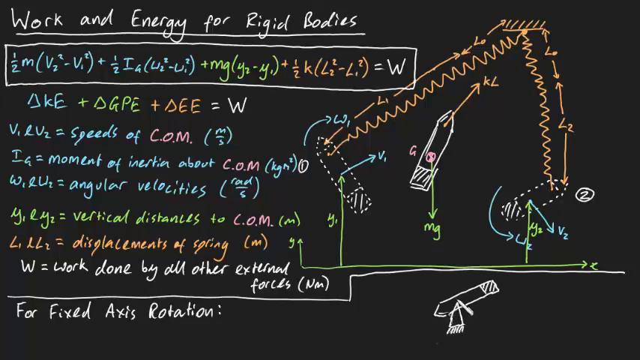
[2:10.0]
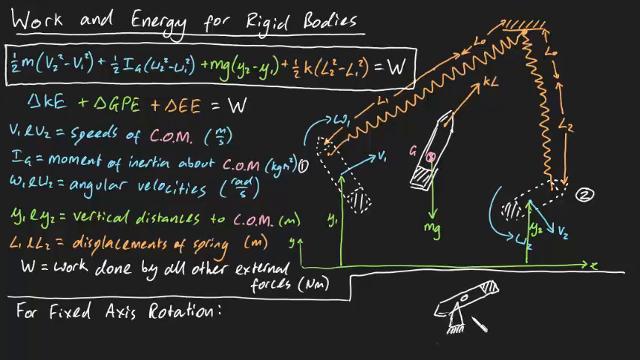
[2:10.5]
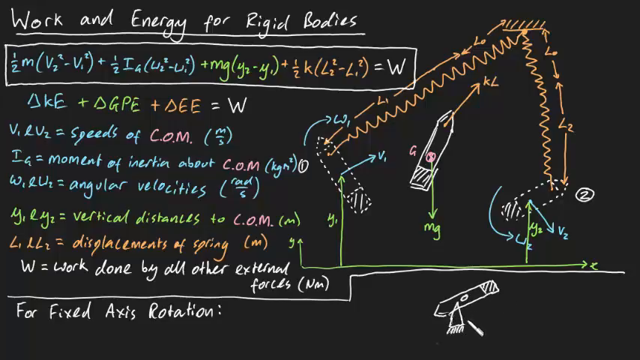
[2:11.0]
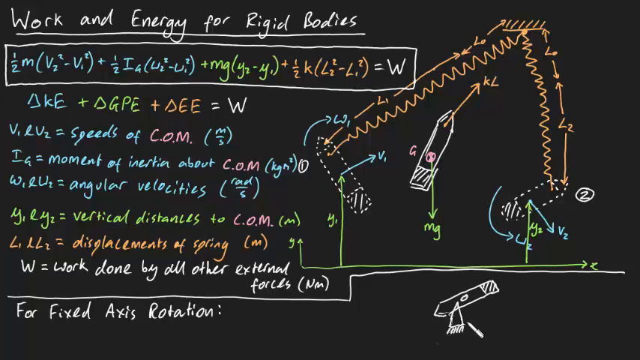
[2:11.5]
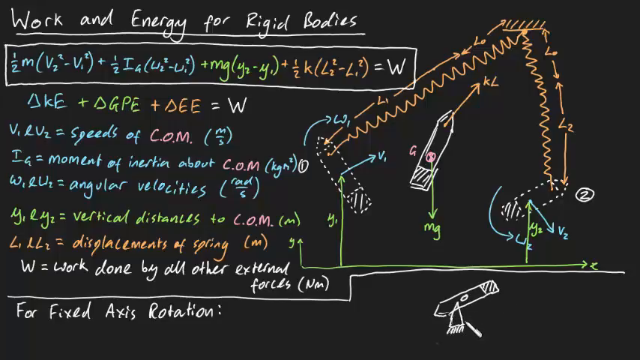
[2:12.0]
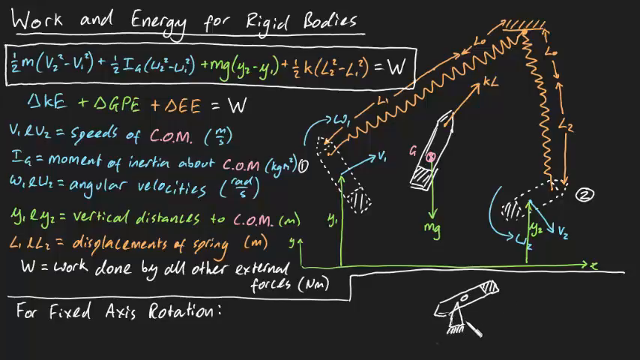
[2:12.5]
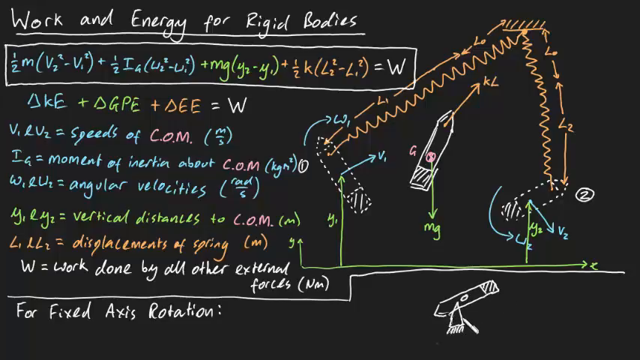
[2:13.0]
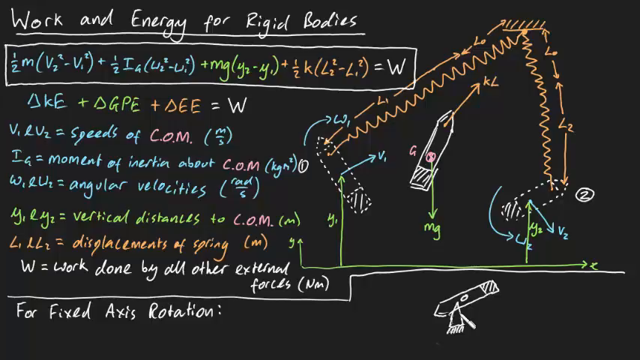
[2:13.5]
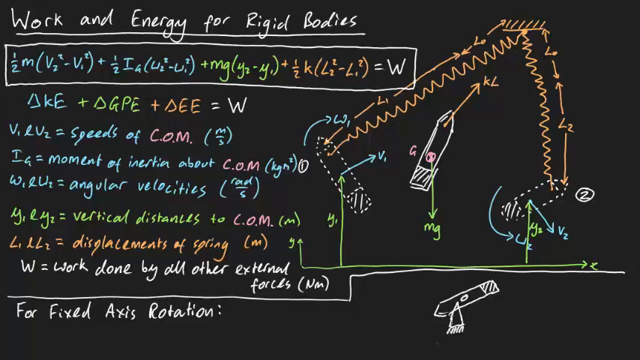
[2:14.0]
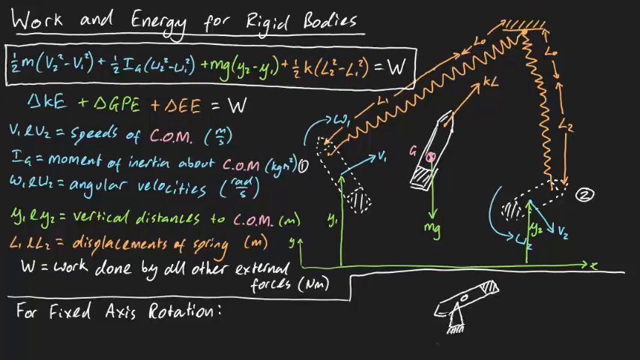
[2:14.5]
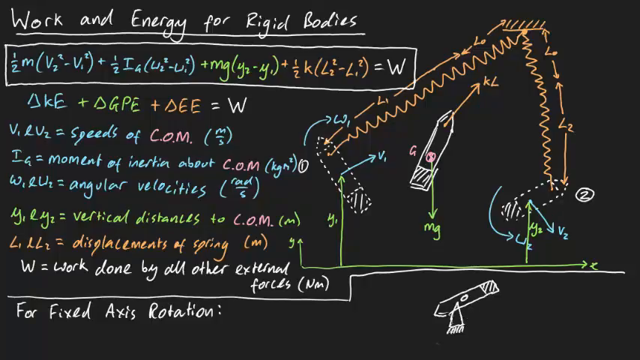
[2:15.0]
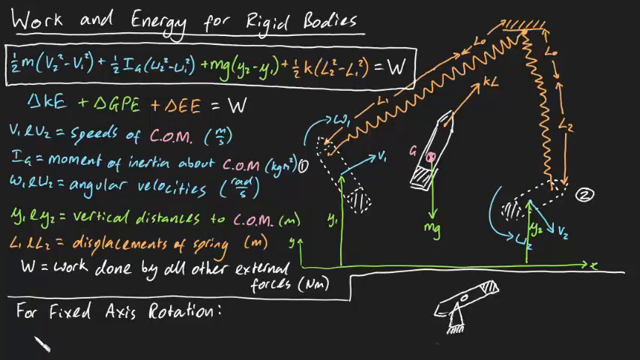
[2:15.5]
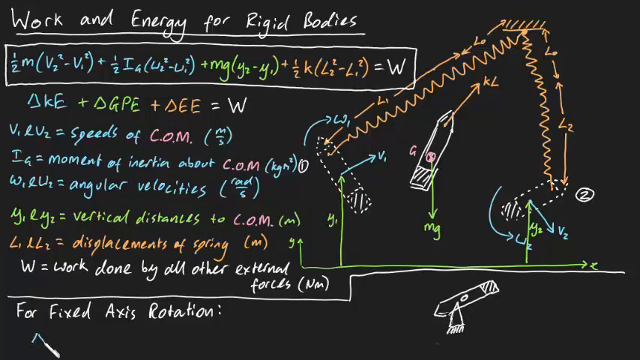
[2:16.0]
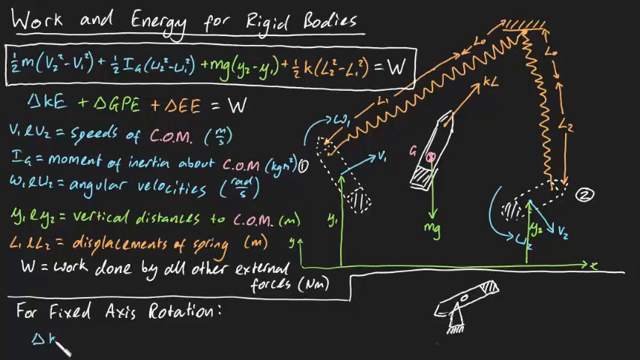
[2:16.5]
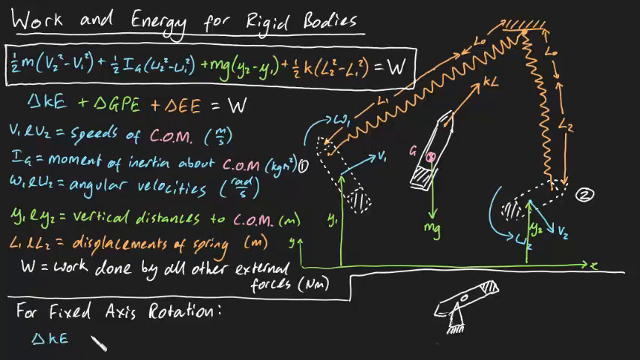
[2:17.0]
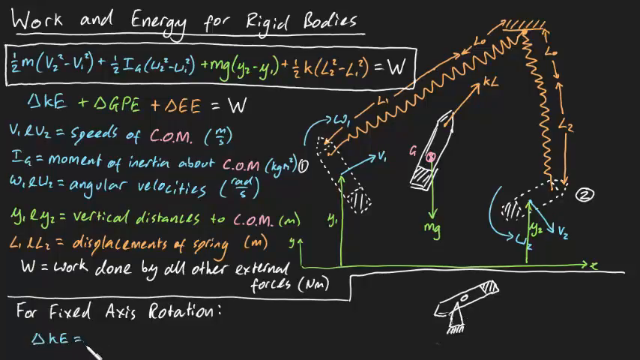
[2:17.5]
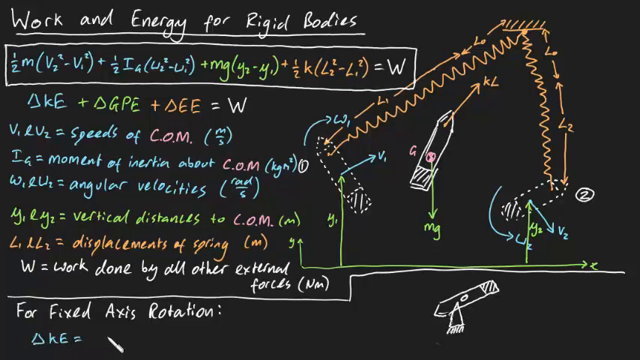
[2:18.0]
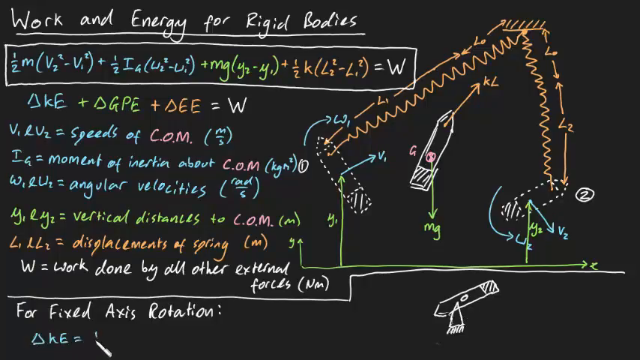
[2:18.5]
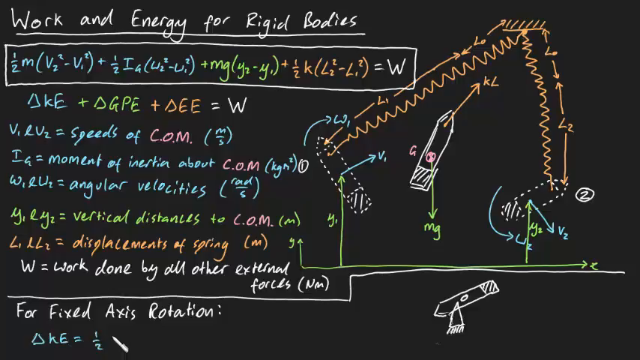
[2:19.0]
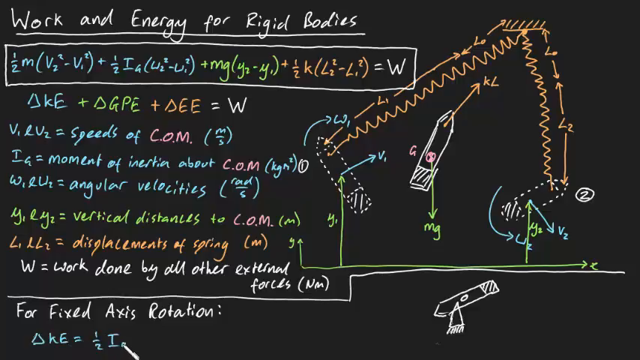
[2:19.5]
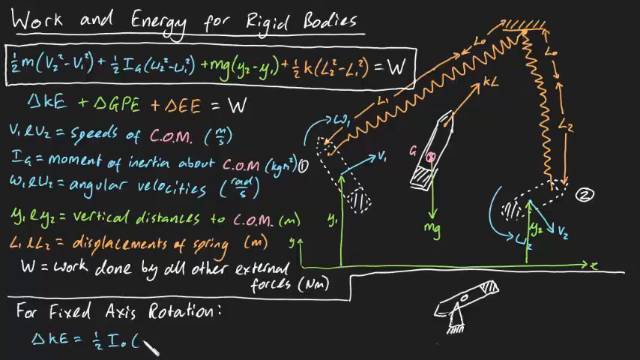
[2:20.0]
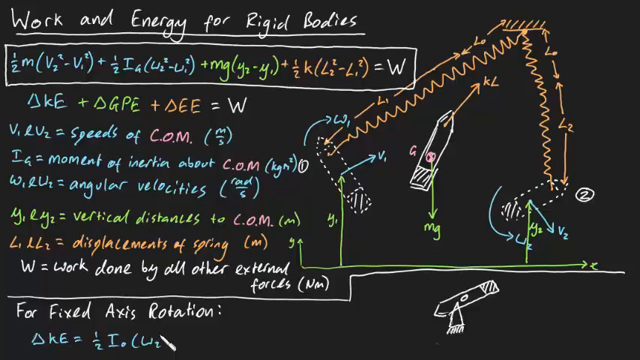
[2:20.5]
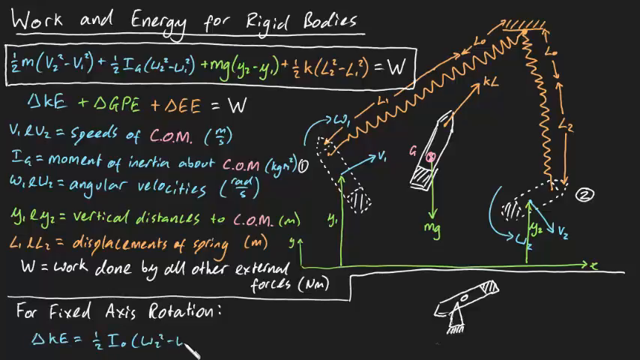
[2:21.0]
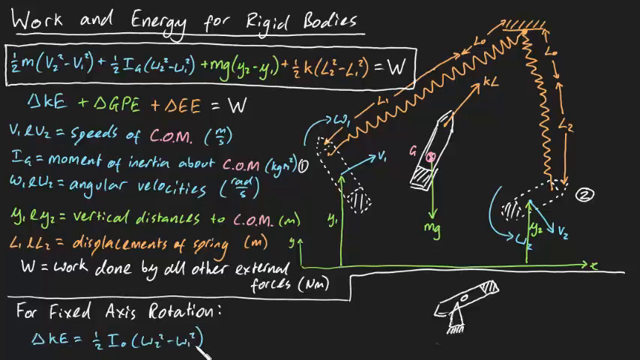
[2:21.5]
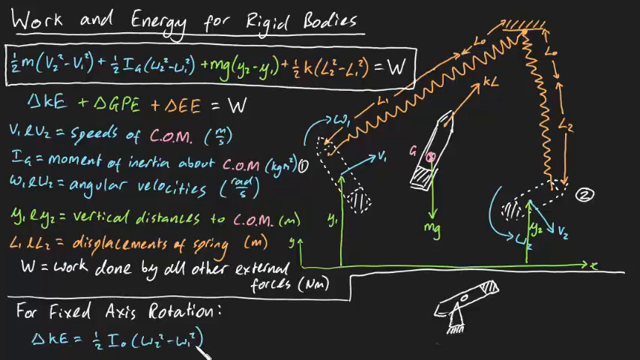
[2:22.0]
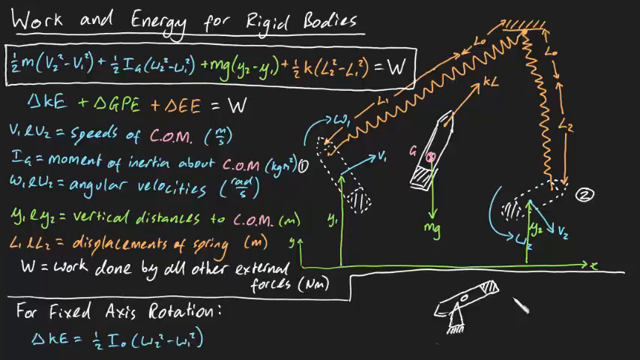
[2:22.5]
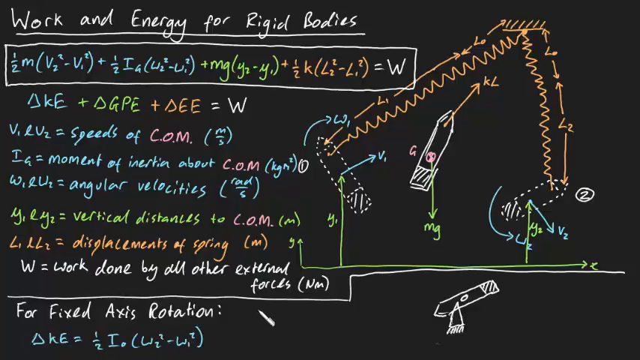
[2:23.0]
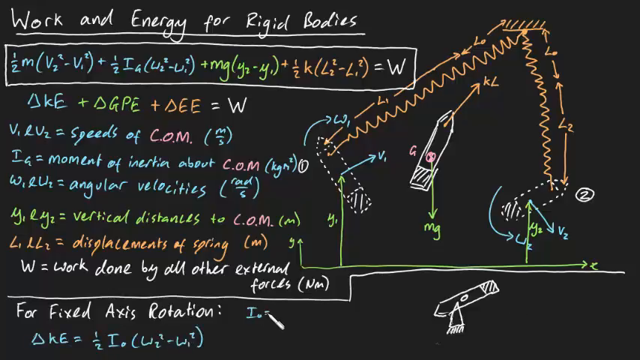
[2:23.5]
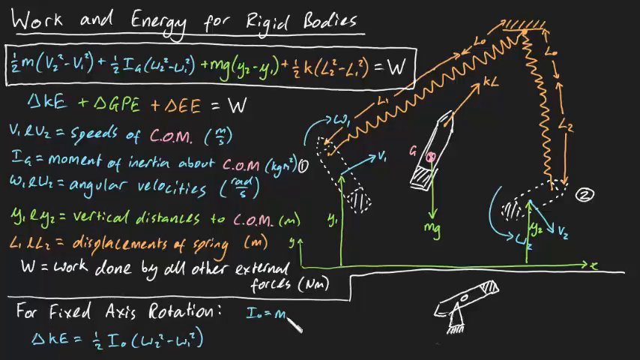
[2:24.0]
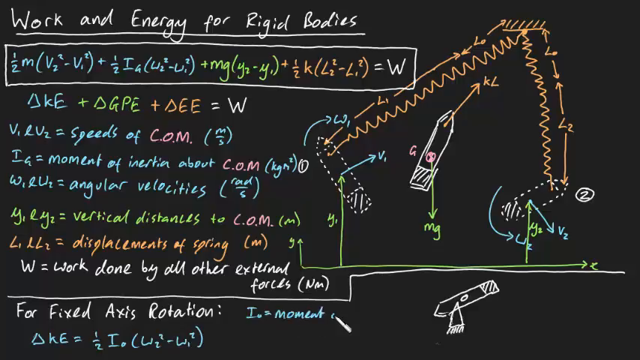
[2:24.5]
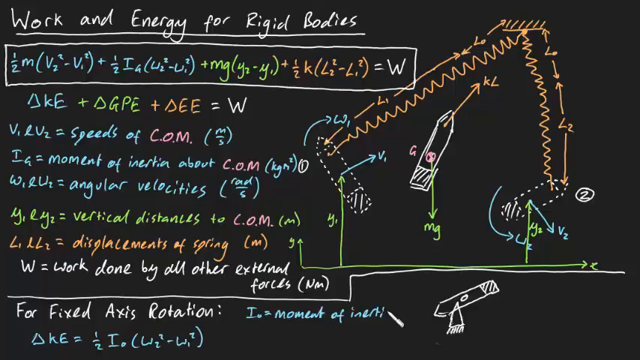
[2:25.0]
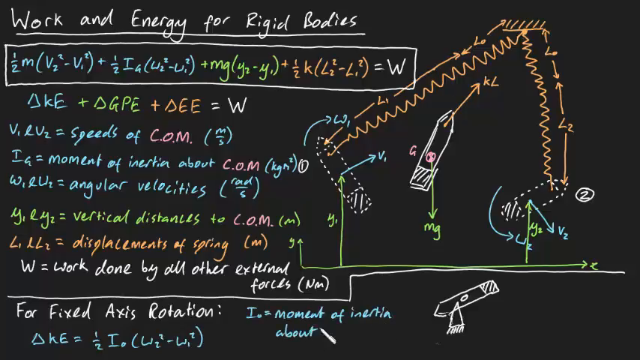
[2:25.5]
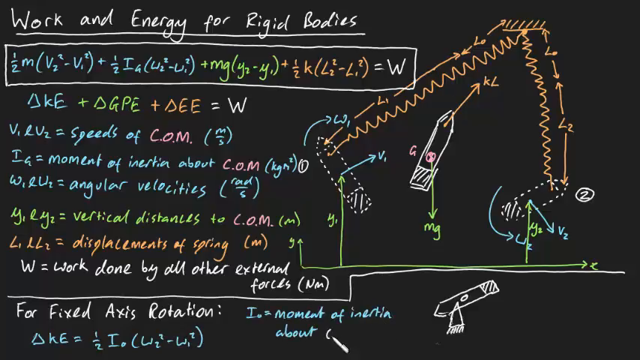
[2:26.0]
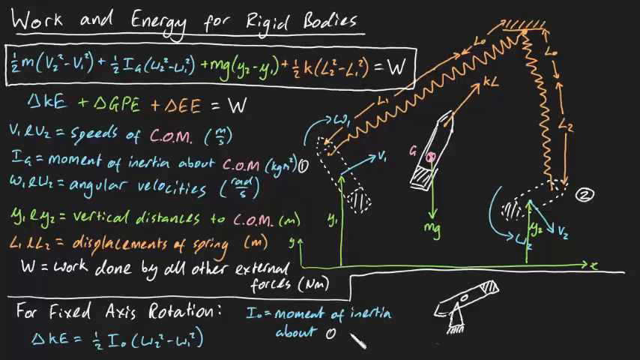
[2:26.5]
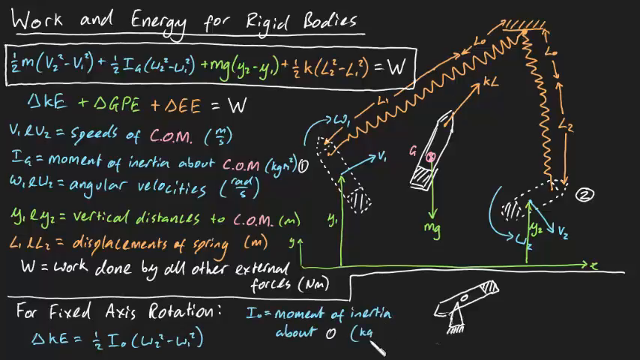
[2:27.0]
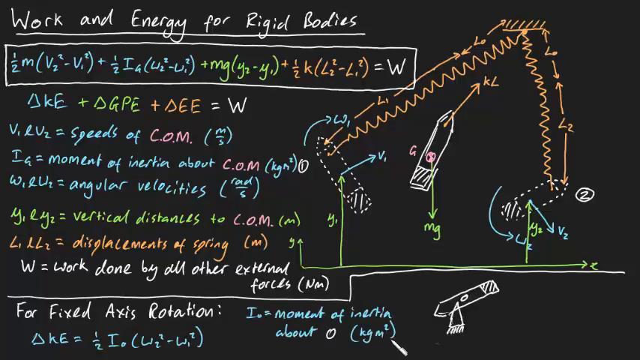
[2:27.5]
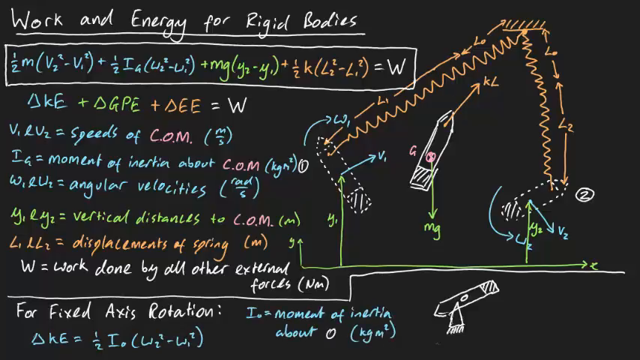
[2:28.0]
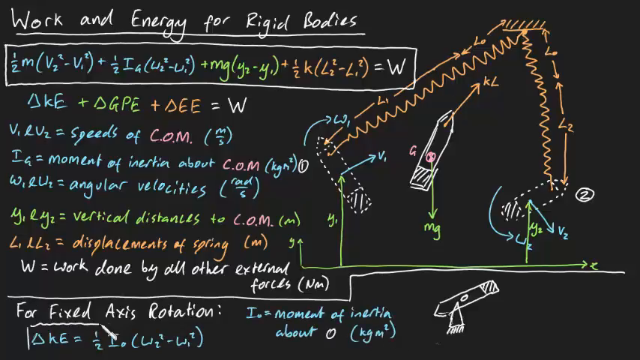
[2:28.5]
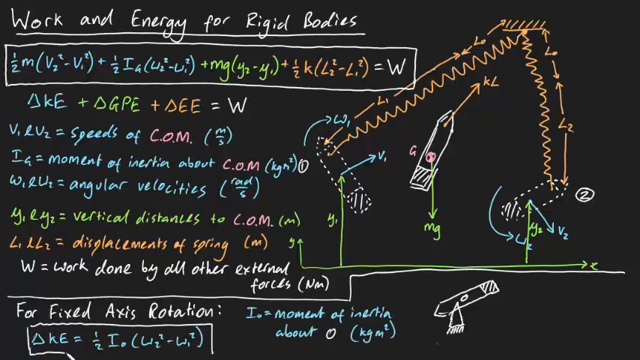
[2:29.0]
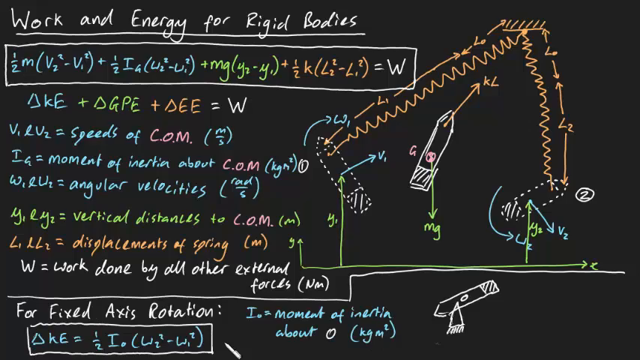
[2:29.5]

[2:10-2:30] The white cursor is still in the lower right corner of the screen, then moves quickly to the lower left corner, where it begins writing mathematical formulas in blue that include letters, numbers, equal signs and parentheses. Next to this formula it writes another one, also in blue, and immediately returns to the lower left corner. The cursor moves very quickly and continuously back and forth between the left and right sides of the screen, but its fluid movement is easy to follow.